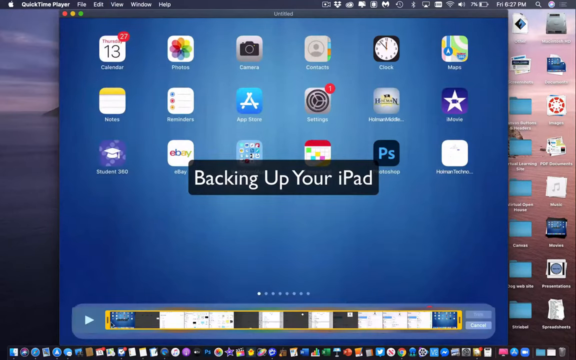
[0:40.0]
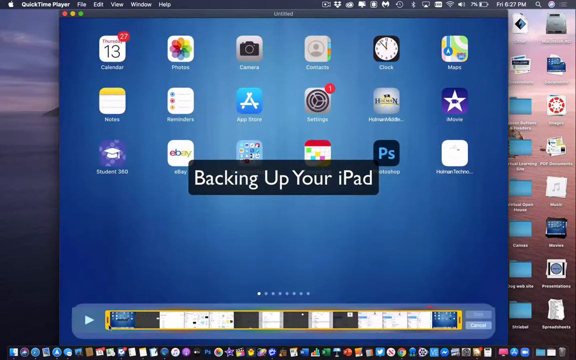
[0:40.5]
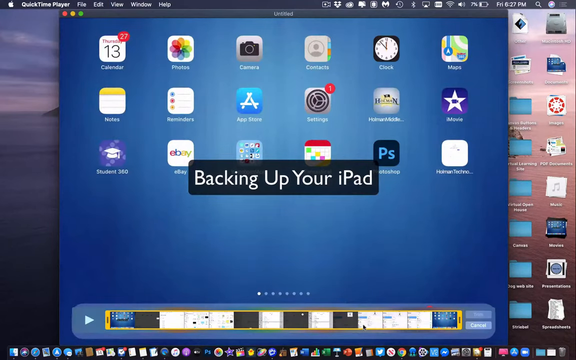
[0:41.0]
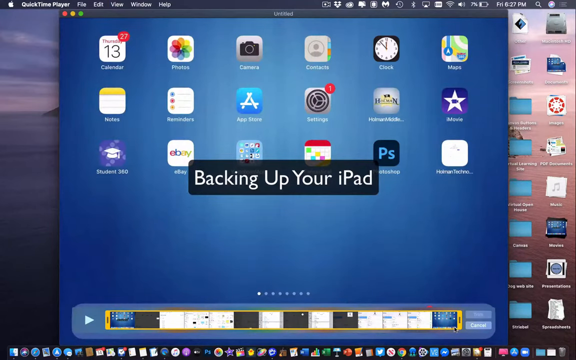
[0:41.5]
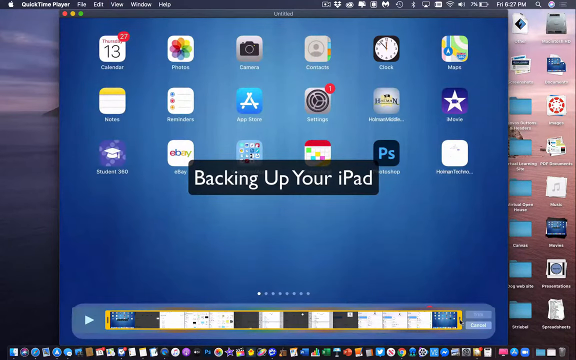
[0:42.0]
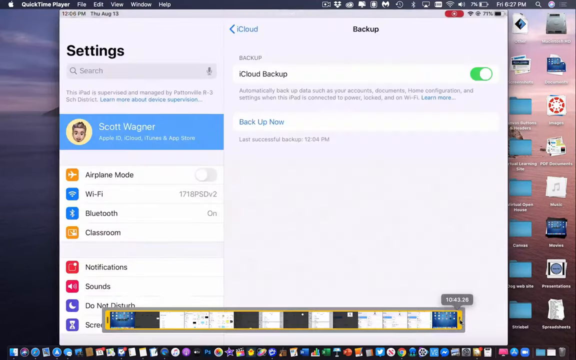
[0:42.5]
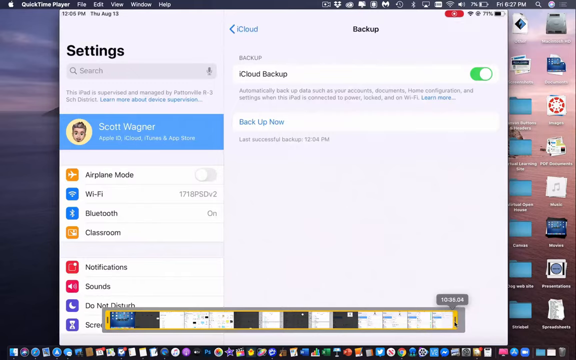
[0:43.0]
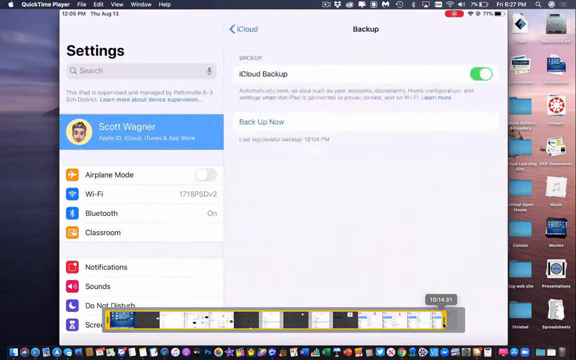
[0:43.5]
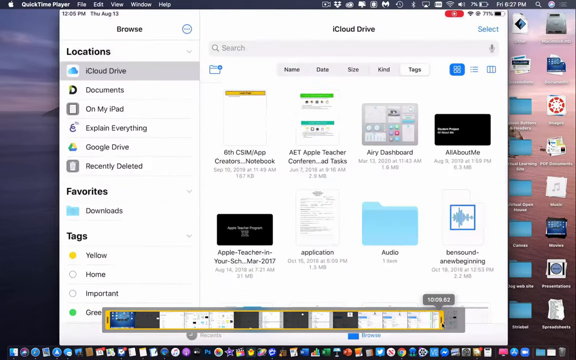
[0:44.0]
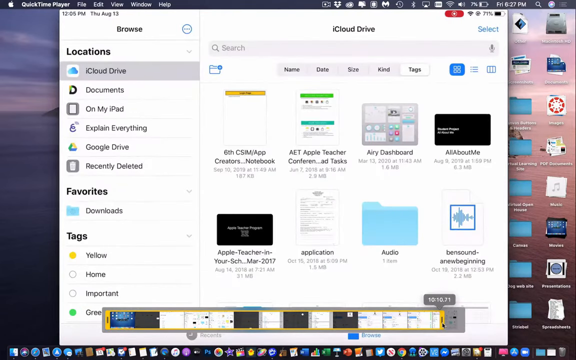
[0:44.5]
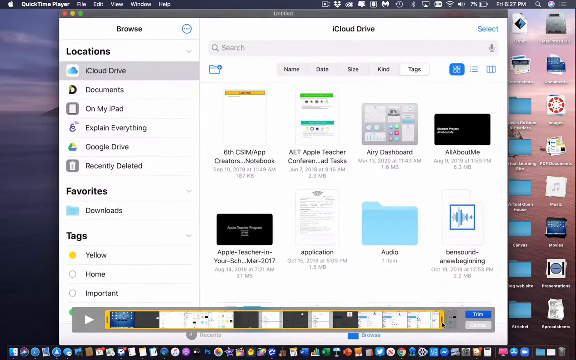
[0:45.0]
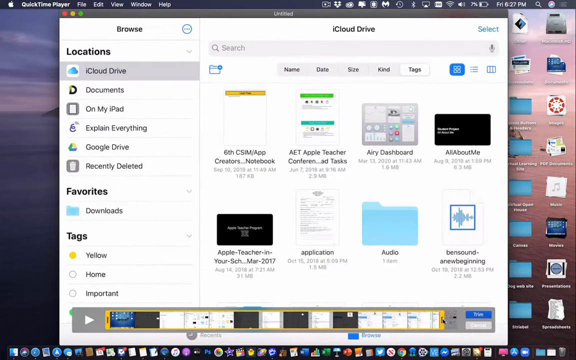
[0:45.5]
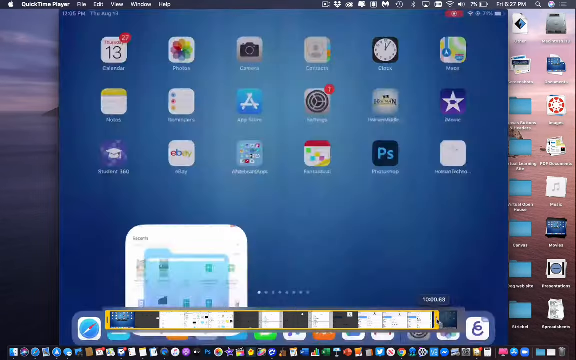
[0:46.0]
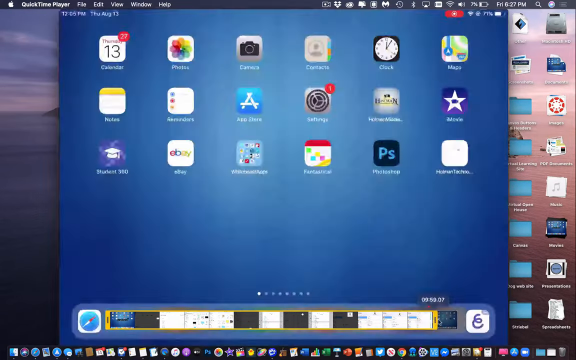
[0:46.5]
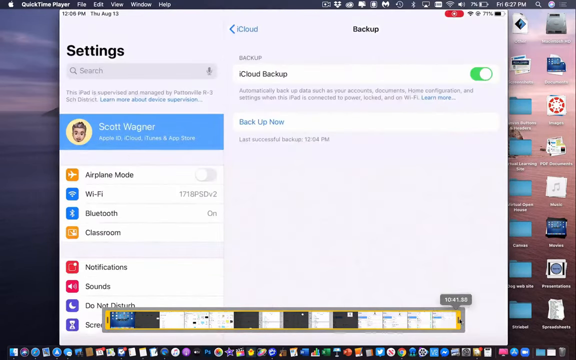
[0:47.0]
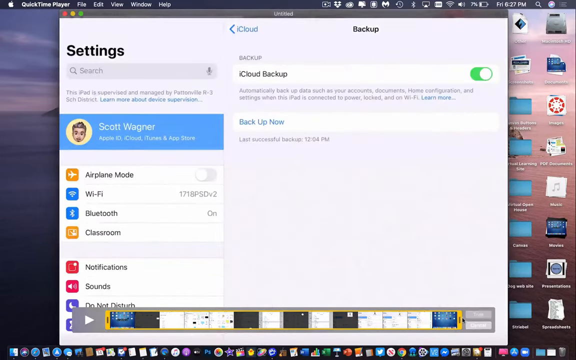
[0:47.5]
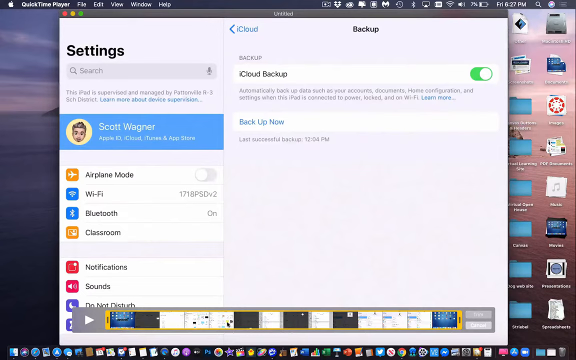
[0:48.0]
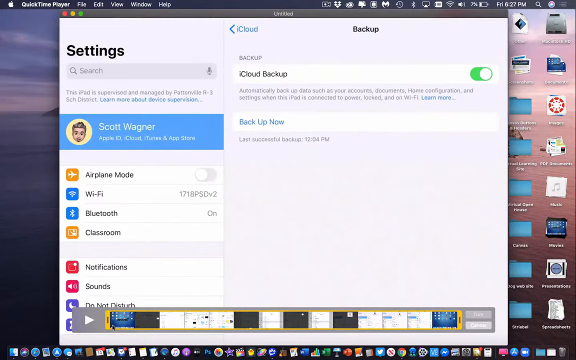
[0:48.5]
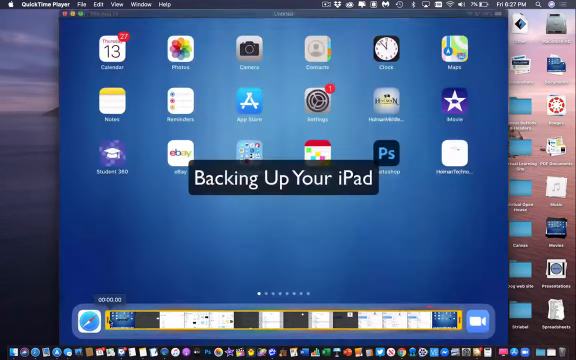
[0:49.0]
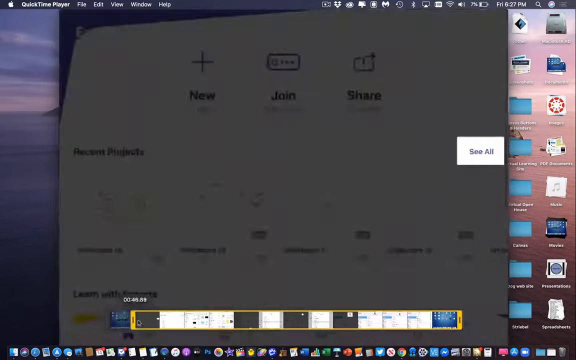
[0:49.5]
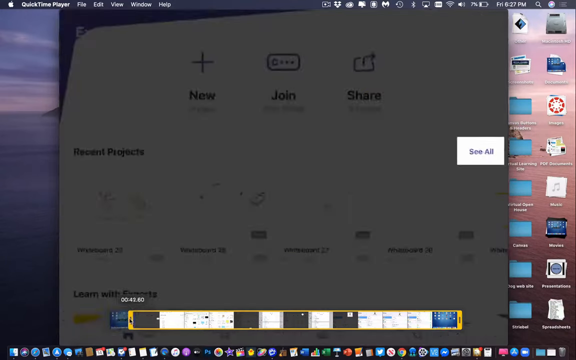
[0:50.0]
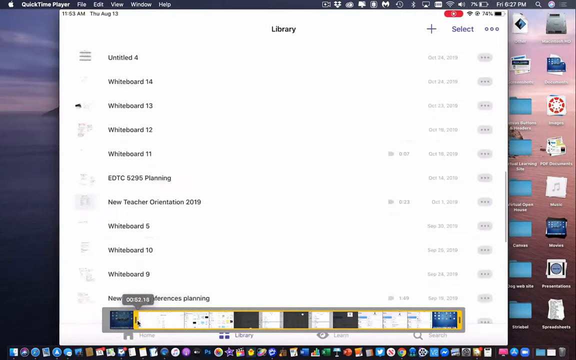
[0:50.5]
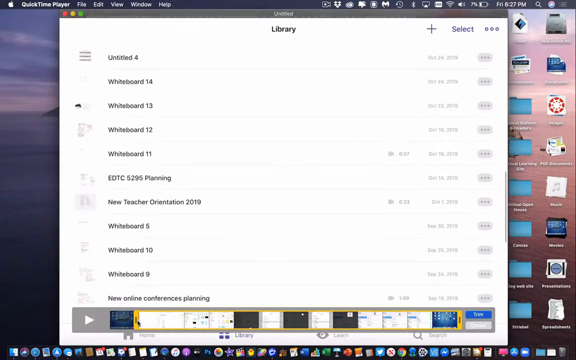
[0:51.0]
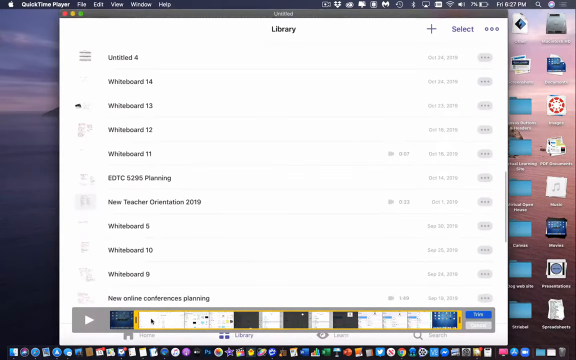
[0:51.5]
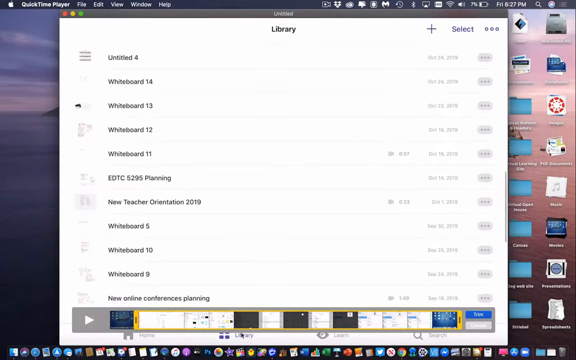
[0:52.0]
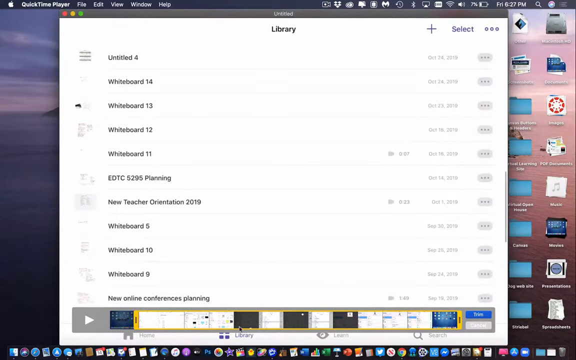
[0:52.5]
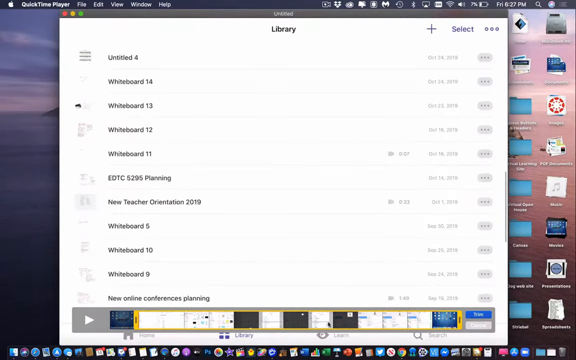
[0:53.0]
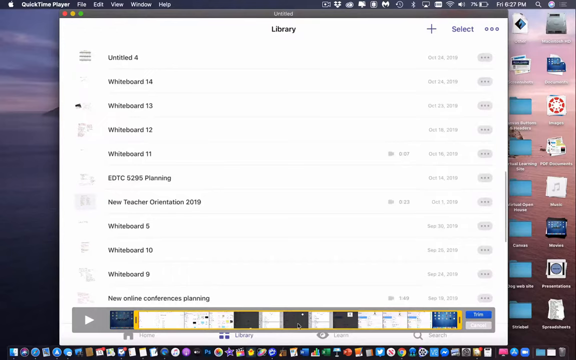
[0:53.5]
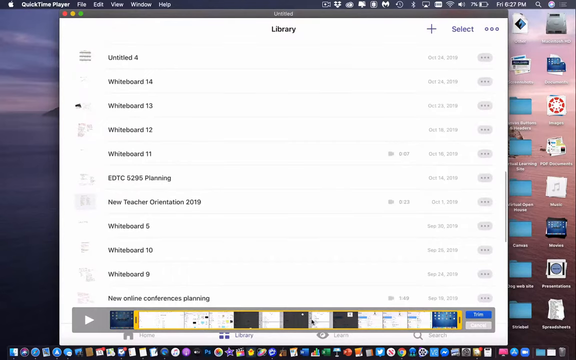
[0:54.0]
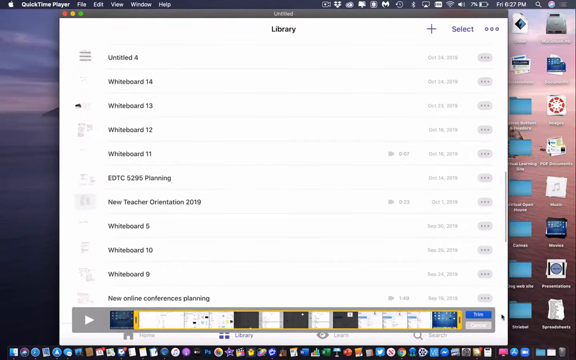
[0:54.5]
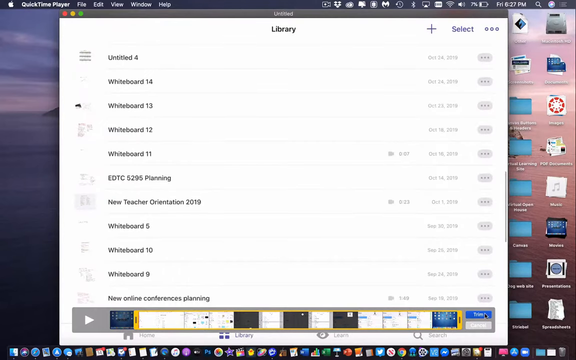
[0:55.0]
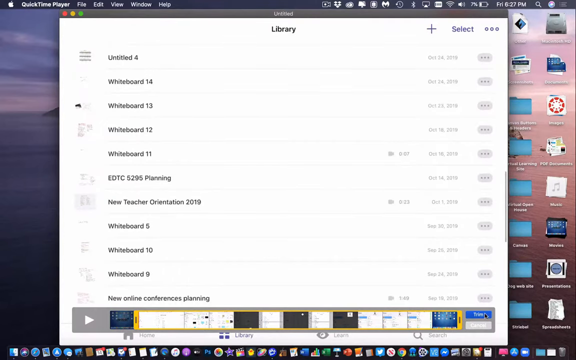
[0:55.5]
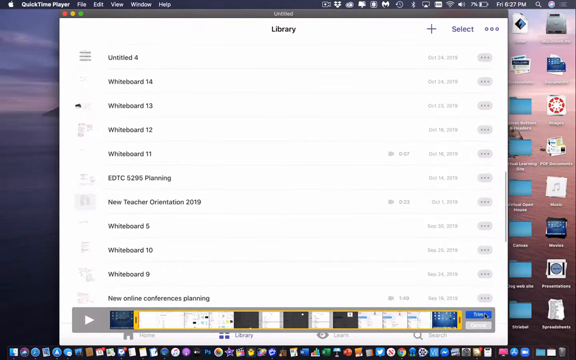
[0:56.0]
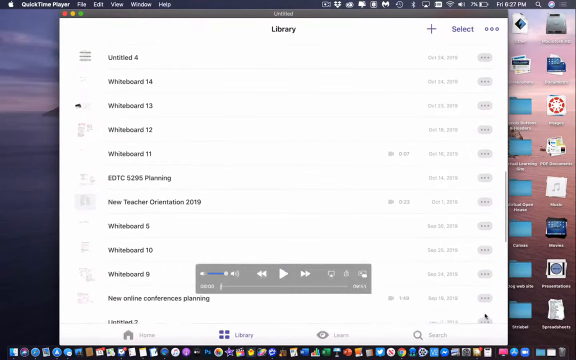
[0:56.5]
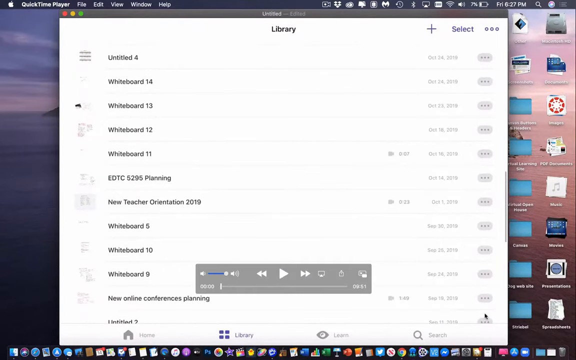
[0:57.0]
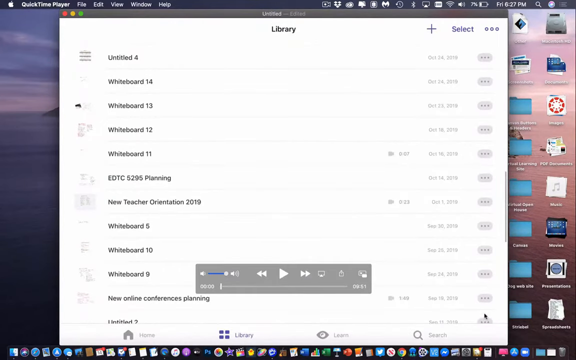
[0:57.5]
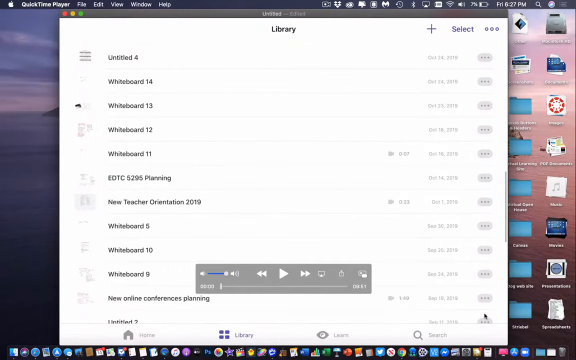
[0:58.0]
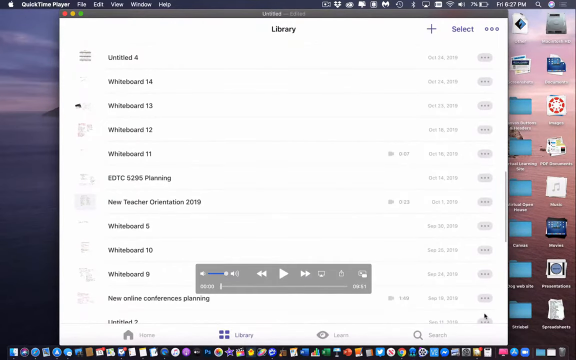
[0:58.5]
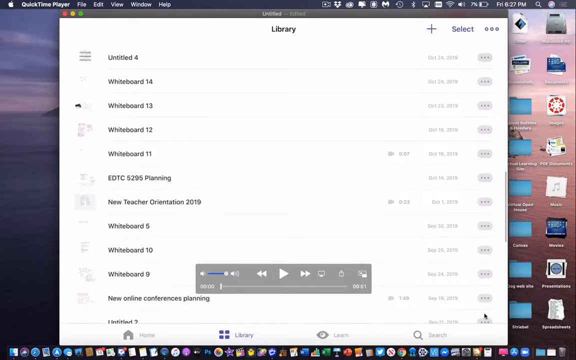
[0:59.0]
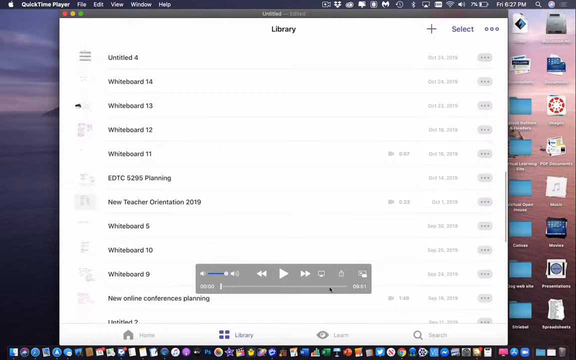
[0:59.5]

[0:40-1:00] A home screen is shown that looks like an Apple iPad. A large blue window is open with about 18 icons on it, and a row of dots at the very bottom indicates more icons to the right. Behind the window are lots of folders, some menu items are at the top, and in the center of the screen it says "backing up your iPad." The person goes to the settings area, then to the iCloud Drive area, which has categories like locations, favorites and tags, and then to a backup area, clicking around very quickly. A timeline at the very bottom shows that everything on the screen is a video being played; the person moves back and forth through it, and wherever they click, that portion of the video appears on the screen. They then pull the left side of the video to the right, making the video a bit smaller. The mouse cursor hovers toward the middle of the timeline and does a few circles, moves to the right and clicks on a blue button, kind of hovers to the right, and then moves over to the center.